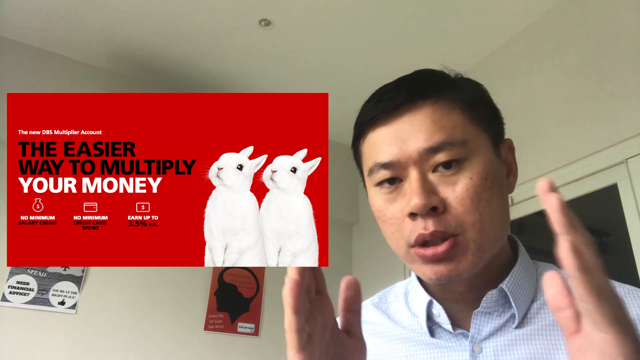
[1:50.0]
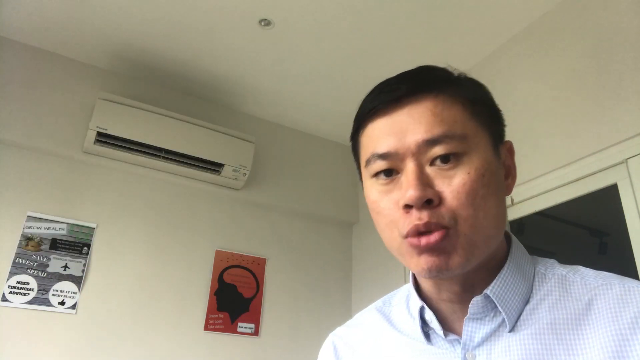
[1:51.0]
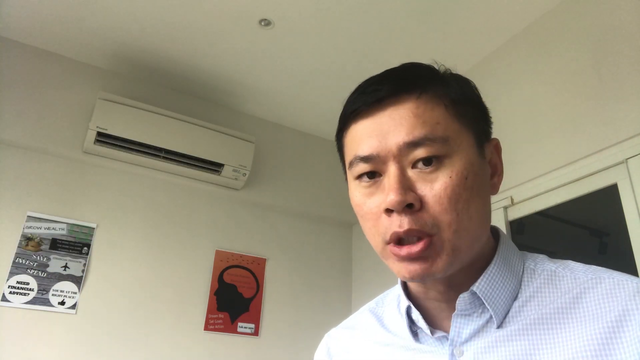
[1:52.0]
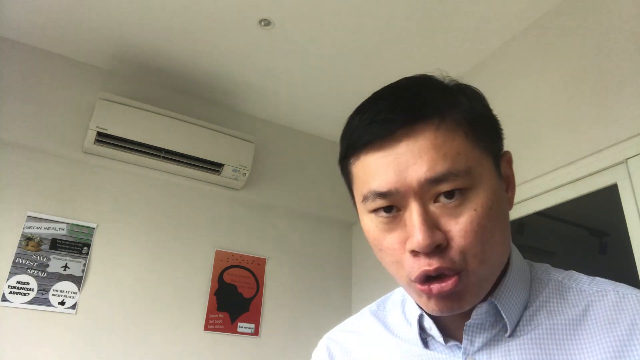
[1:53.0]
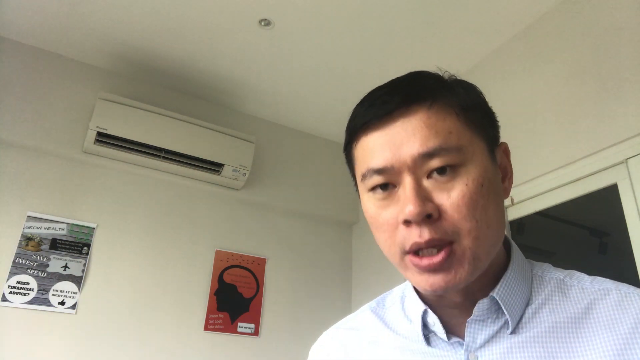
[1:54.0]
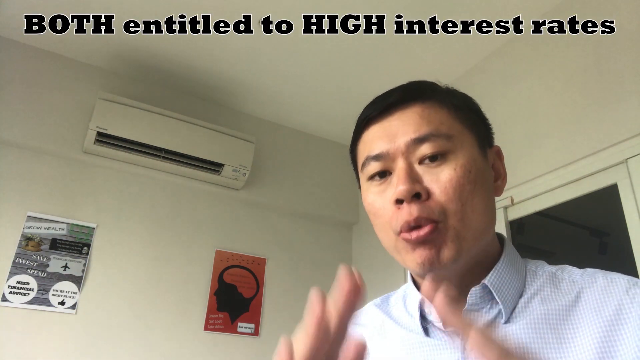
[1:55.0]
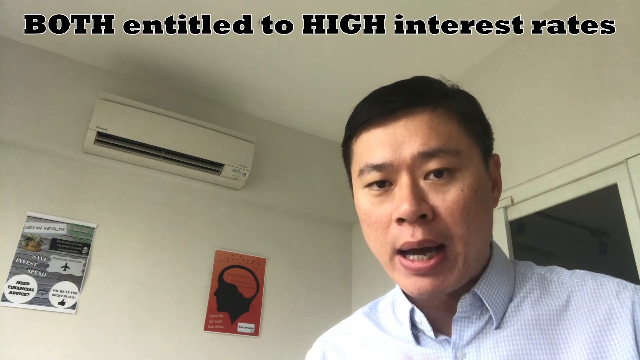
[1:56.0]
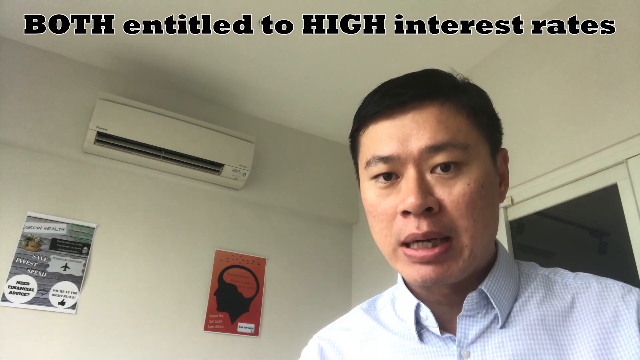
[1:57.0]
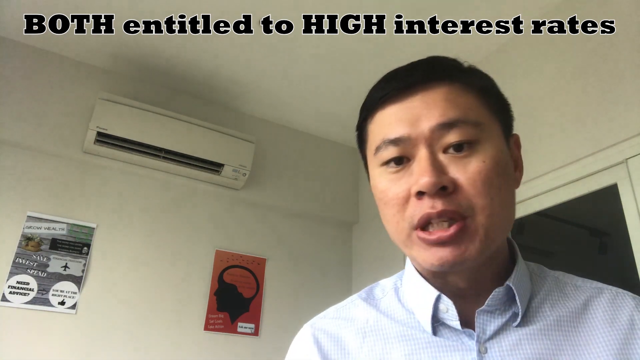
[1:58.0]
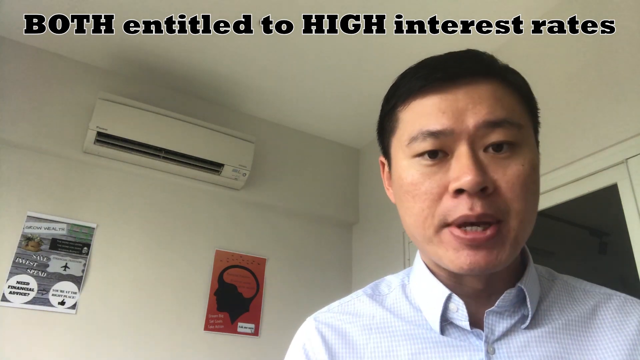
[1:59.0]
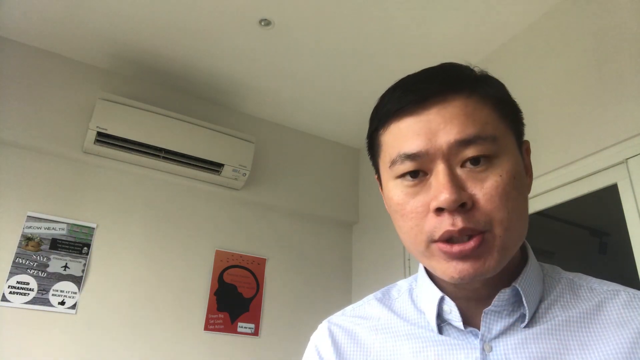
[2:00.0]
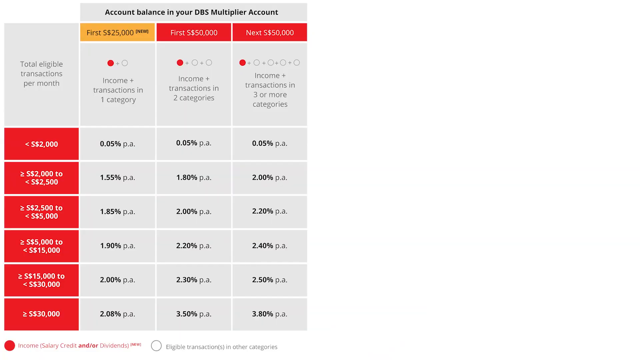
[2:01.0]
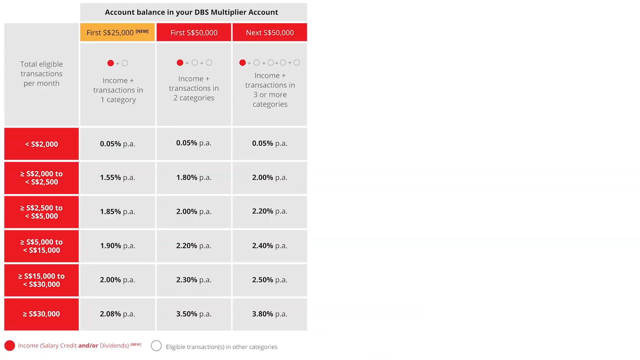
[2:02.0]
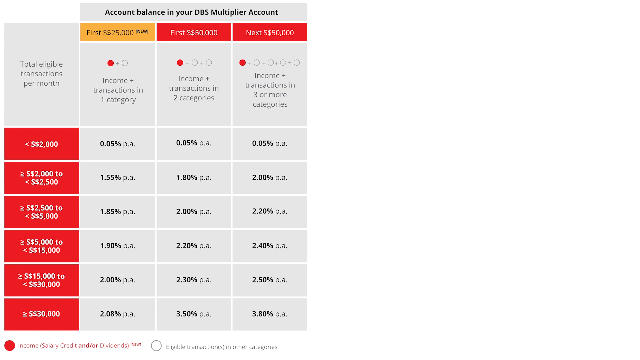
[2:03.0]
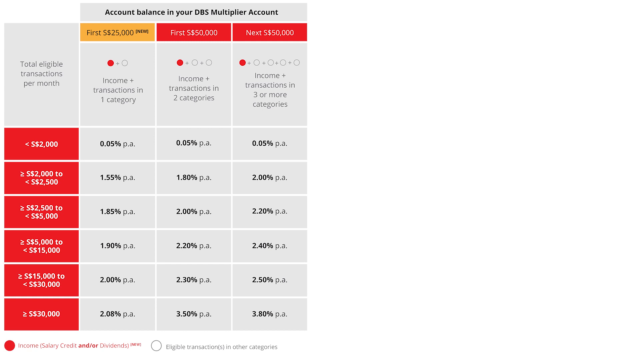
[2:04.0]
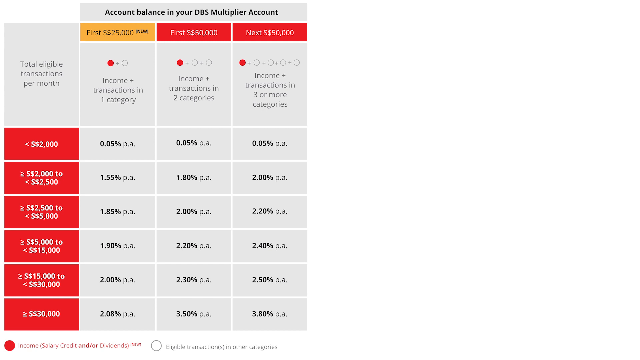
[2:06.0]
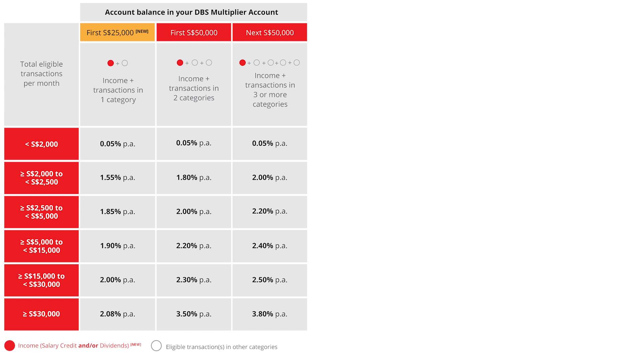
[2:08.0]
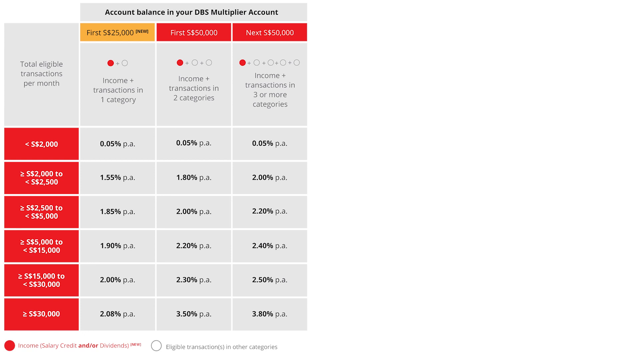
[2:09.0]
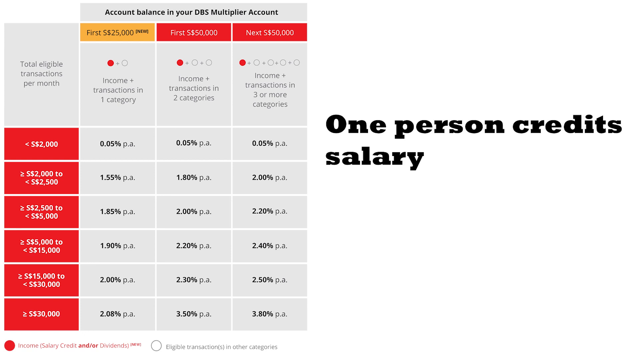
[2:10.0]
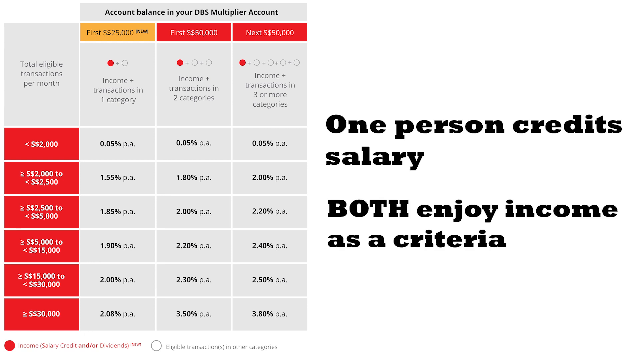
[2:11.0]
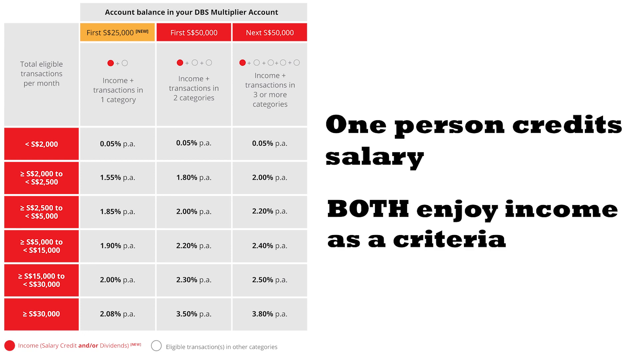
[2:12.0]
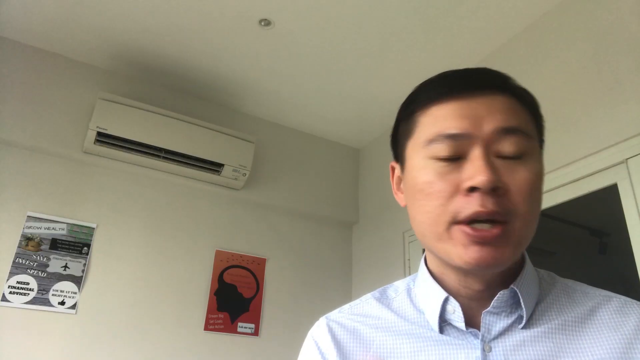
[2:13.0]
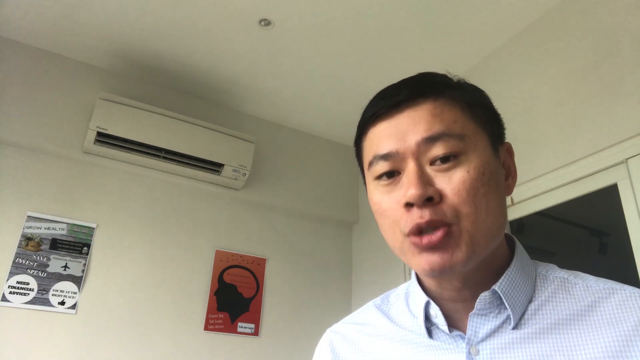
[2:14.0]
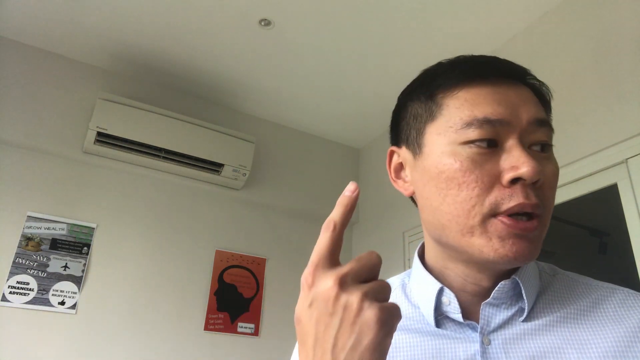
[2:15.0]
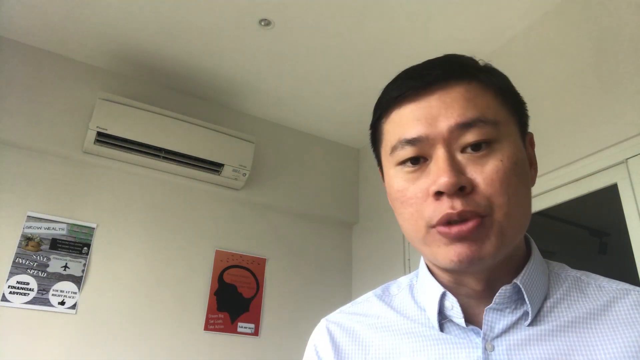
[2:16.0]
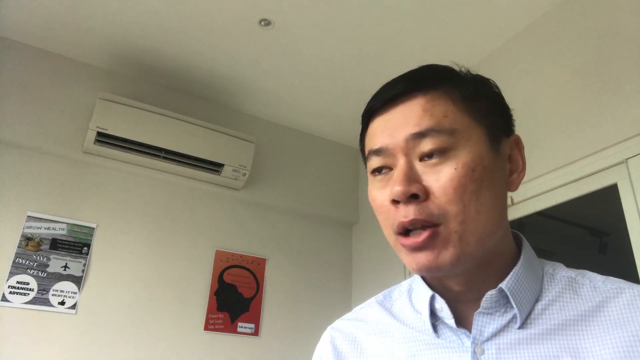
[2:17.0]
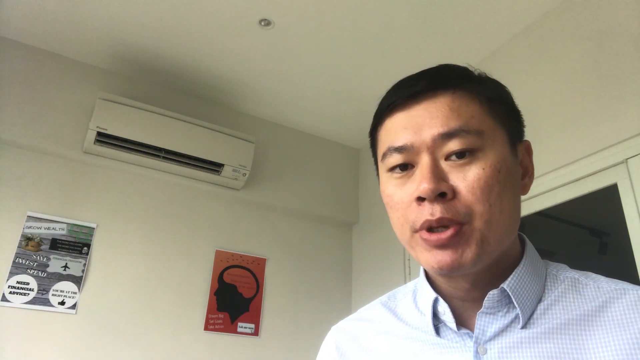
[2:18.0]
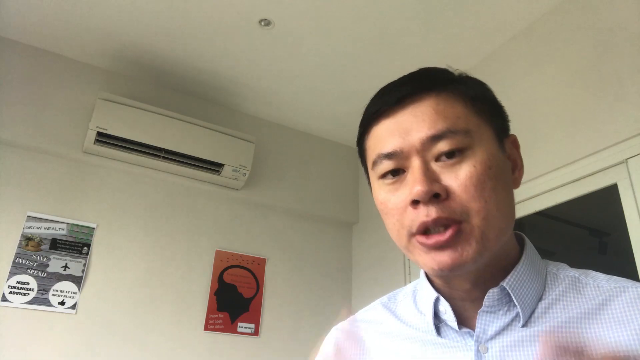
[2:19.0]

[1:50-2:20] The man holds his hands right in front of his face, palms kind of facing each other, moving his hands up. Then he uses both hands at the same time, at the same width, moving across his body and out of the frame, almost like a prayer or thank-you gesture in front of him. Text appears at the top with a white border around black text: "both entitled to have high interest rates", with "both" in capitals. He looks off to the left, almost circling a finger around. A simple colored chart then appears with four columns and a header running across the top that says "account balance". There is a "first 25,000" row in what looks like a yellow box, something like a circle plus a clear one, and a row for less than 2,000, with different dollar ranges going up; it has six rows by four columns. On the right, one criterion reads "one person credits salary" and another refers to both. The video goes back to him speaking with one finger up, then putting one finger onto his left hand as he goes through points.